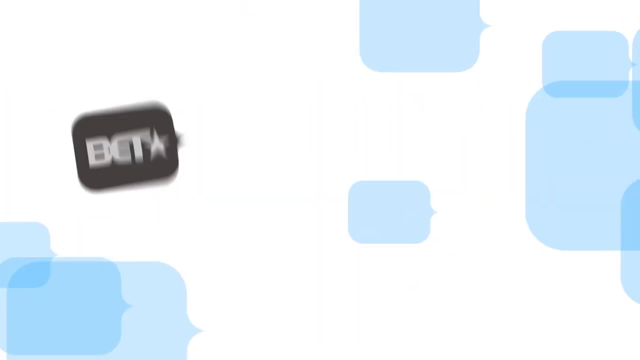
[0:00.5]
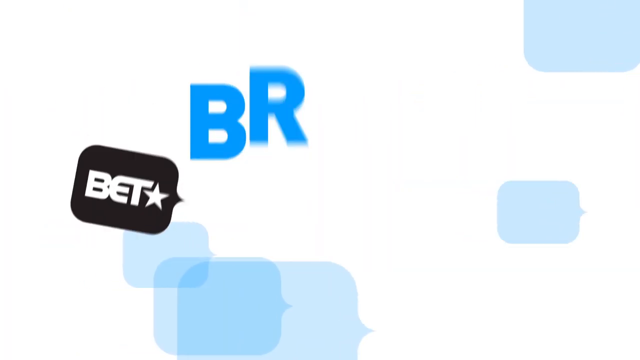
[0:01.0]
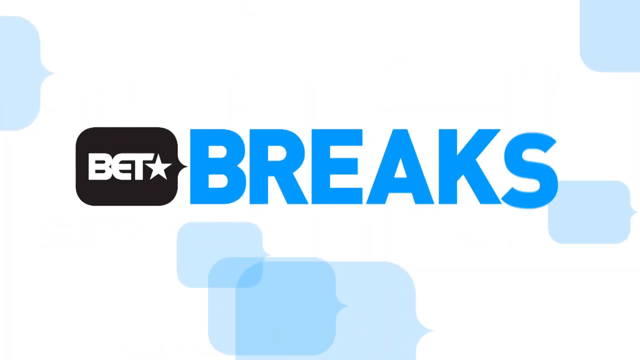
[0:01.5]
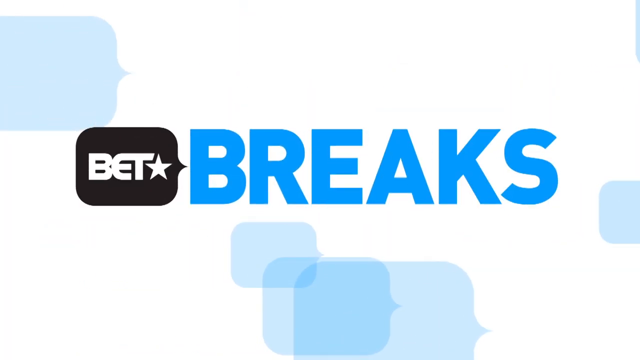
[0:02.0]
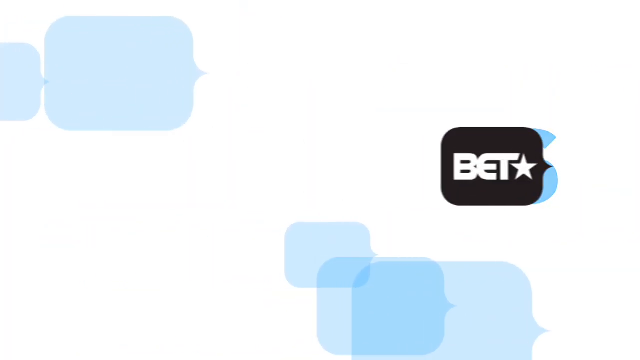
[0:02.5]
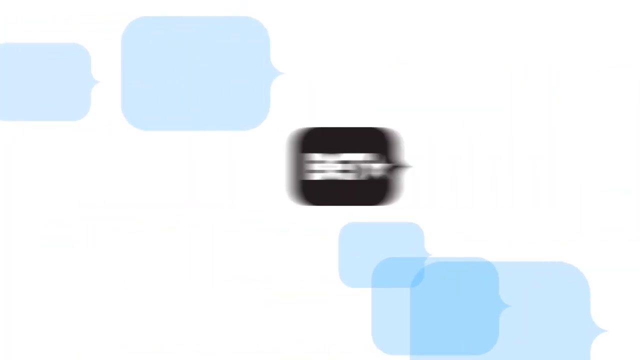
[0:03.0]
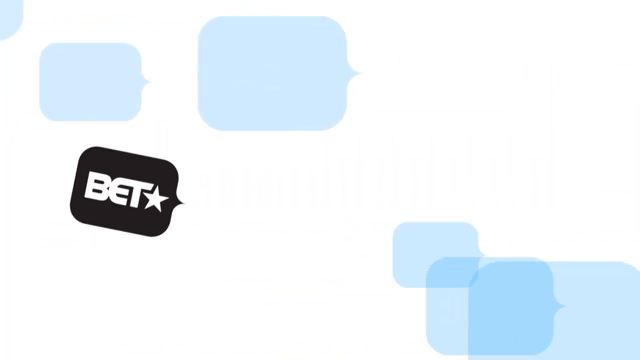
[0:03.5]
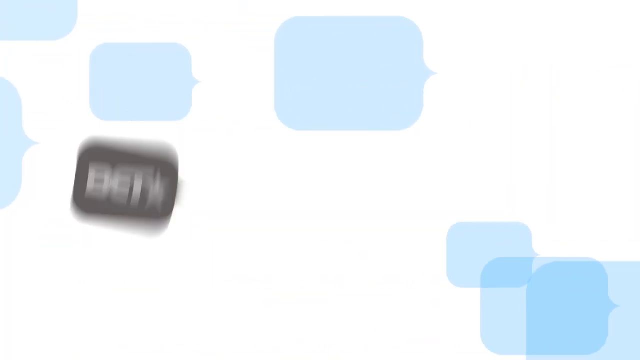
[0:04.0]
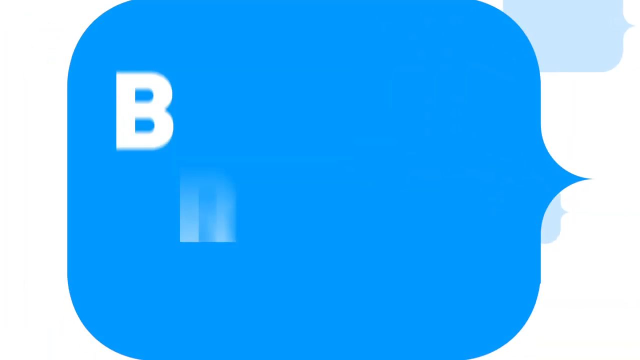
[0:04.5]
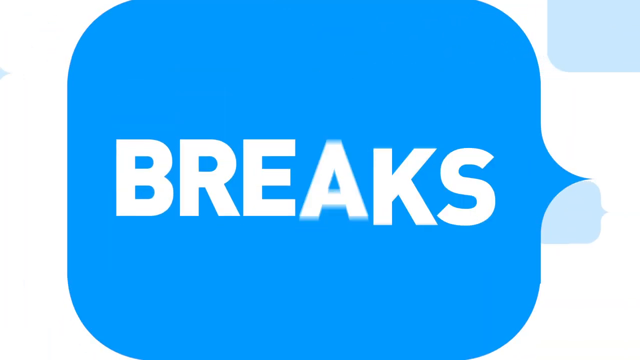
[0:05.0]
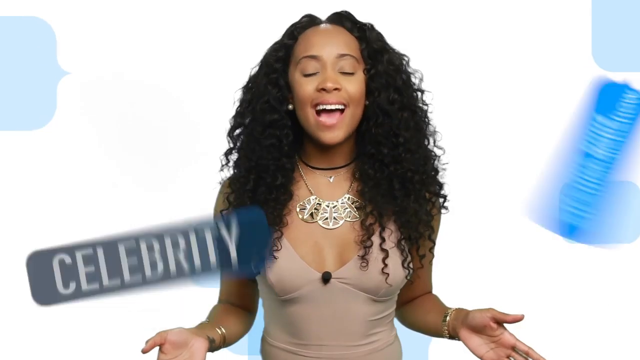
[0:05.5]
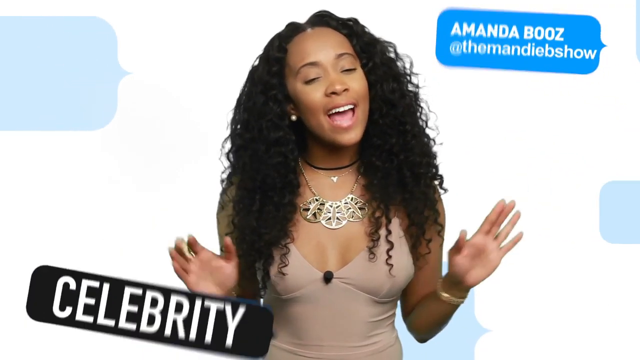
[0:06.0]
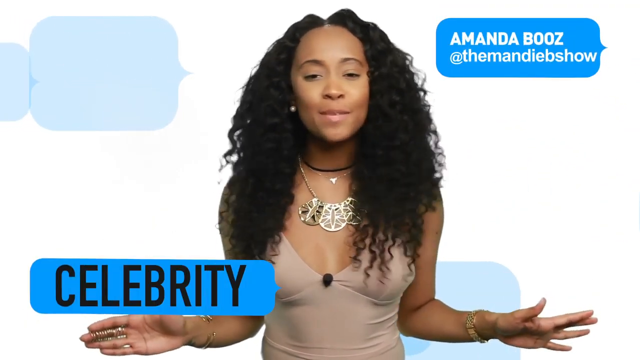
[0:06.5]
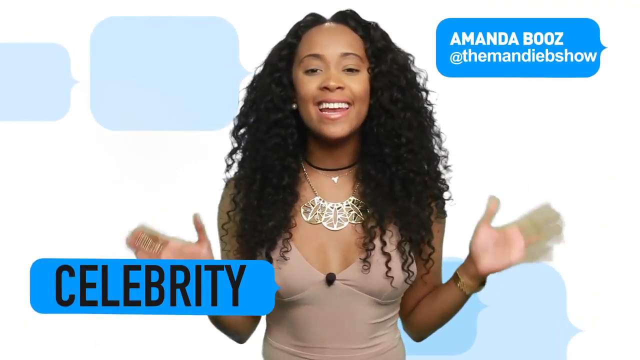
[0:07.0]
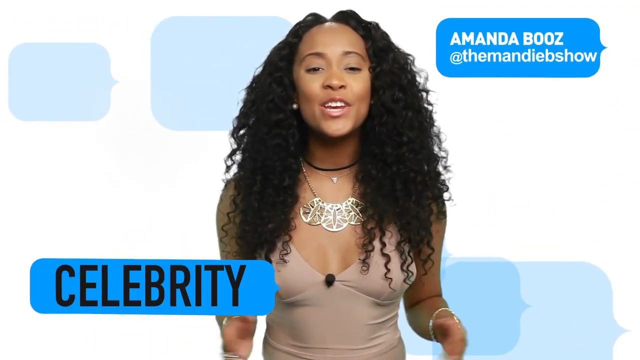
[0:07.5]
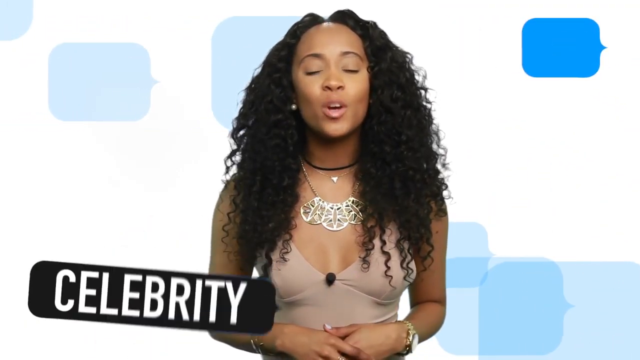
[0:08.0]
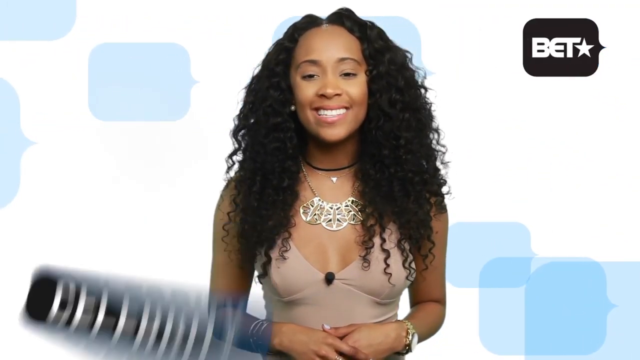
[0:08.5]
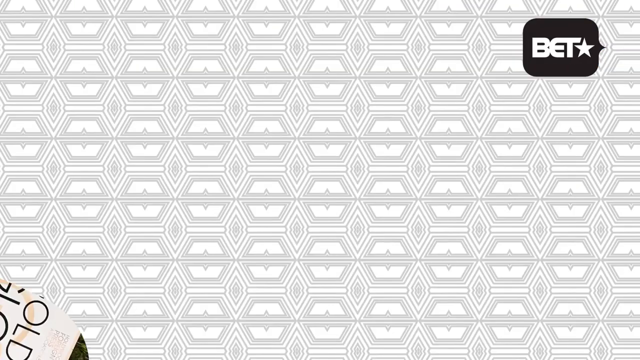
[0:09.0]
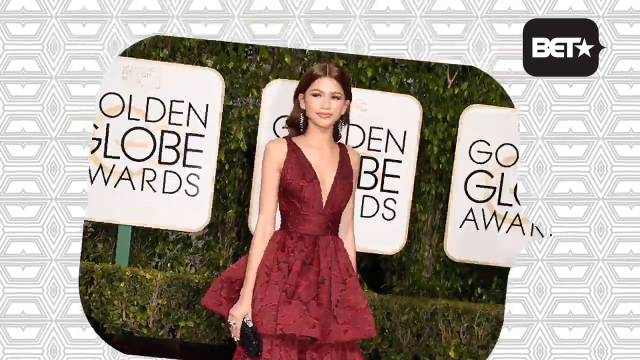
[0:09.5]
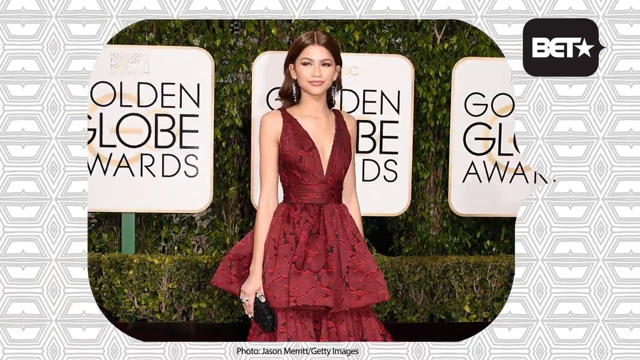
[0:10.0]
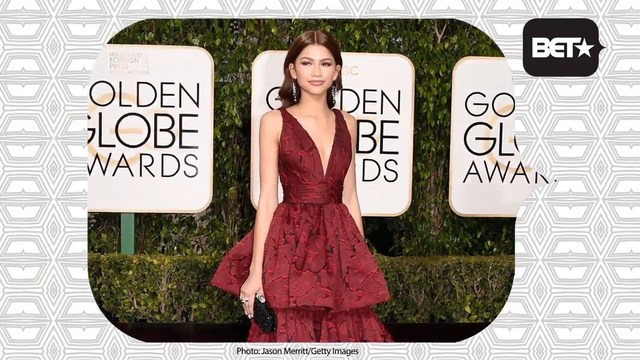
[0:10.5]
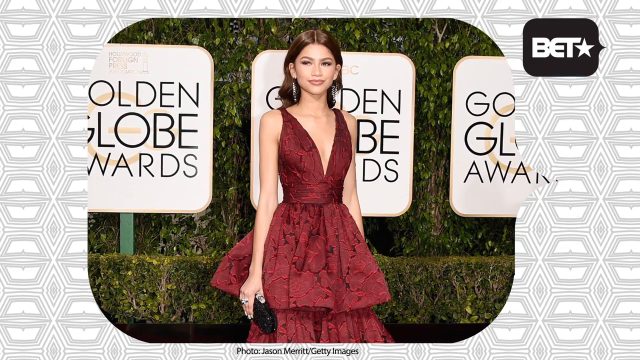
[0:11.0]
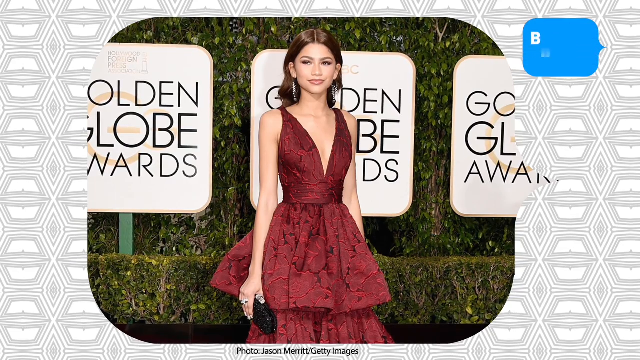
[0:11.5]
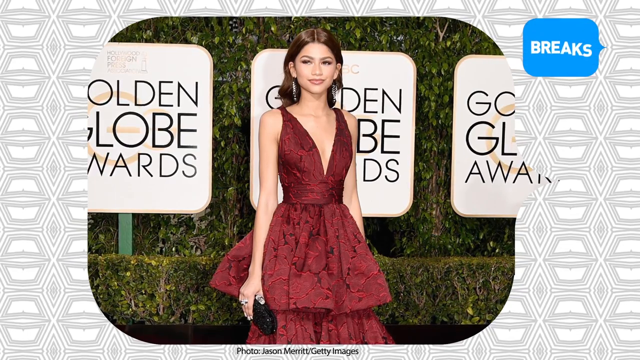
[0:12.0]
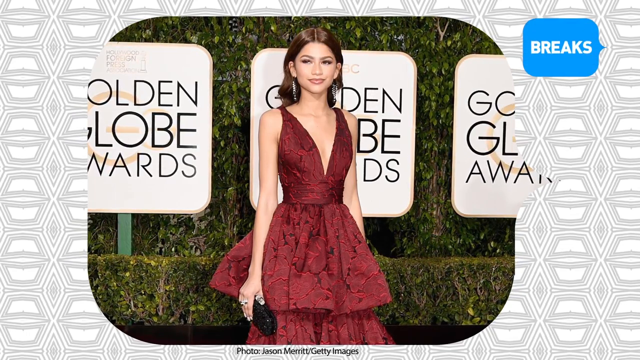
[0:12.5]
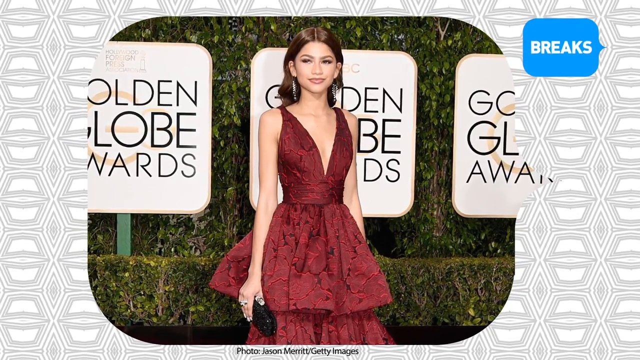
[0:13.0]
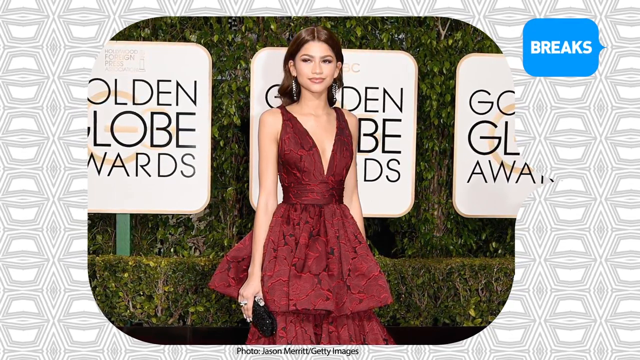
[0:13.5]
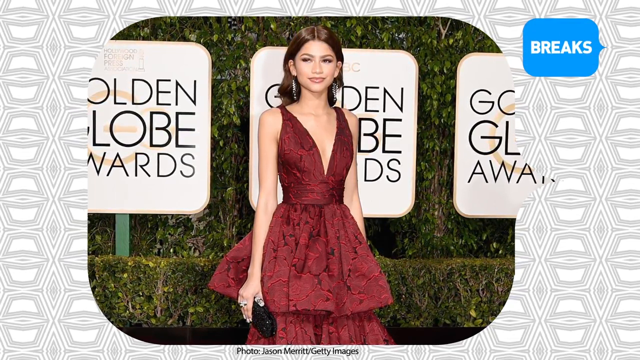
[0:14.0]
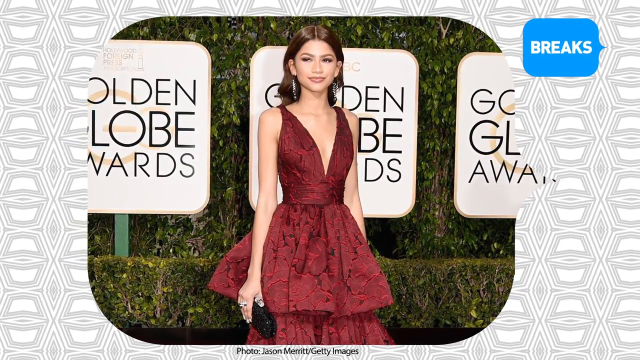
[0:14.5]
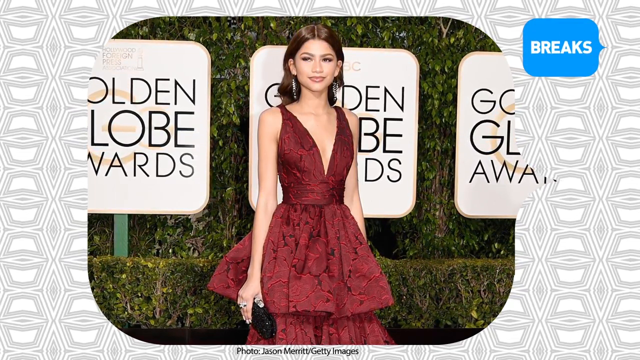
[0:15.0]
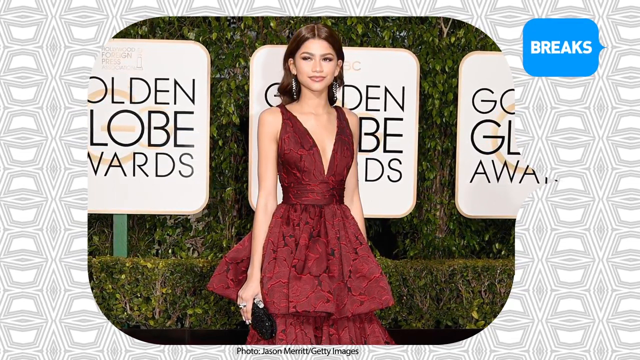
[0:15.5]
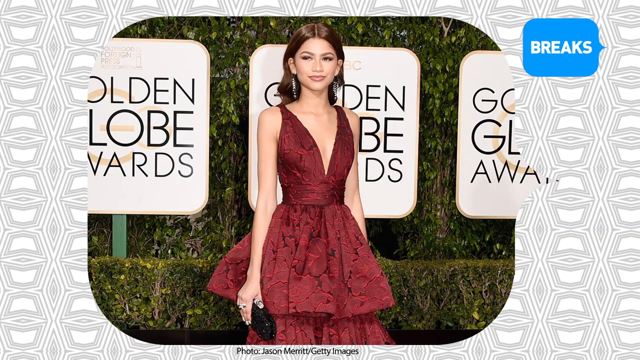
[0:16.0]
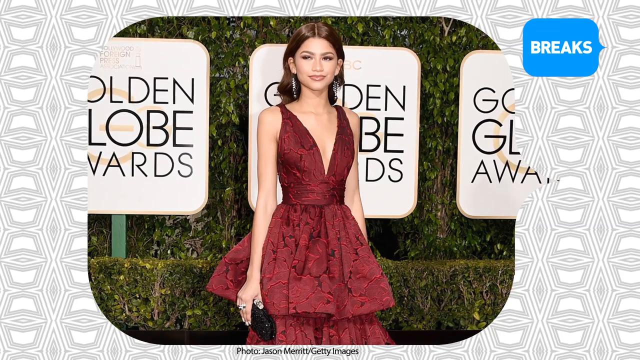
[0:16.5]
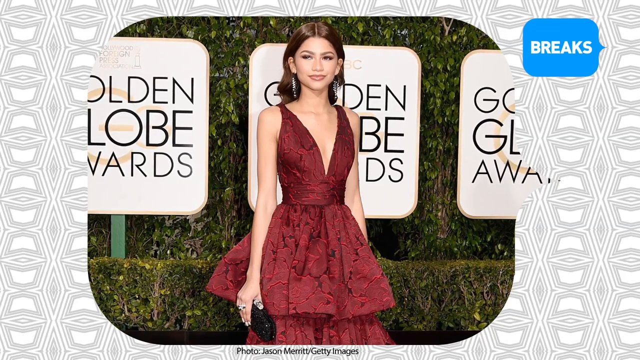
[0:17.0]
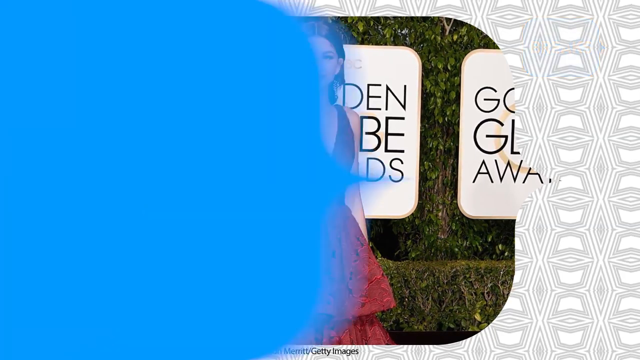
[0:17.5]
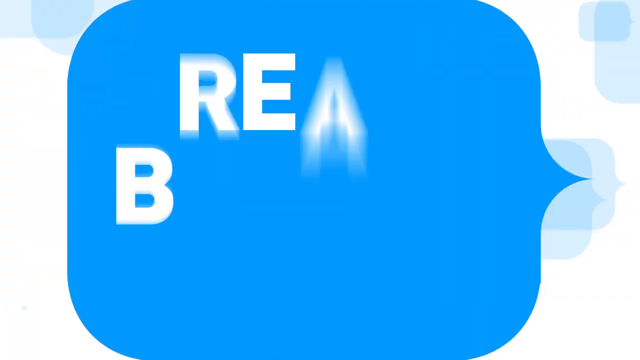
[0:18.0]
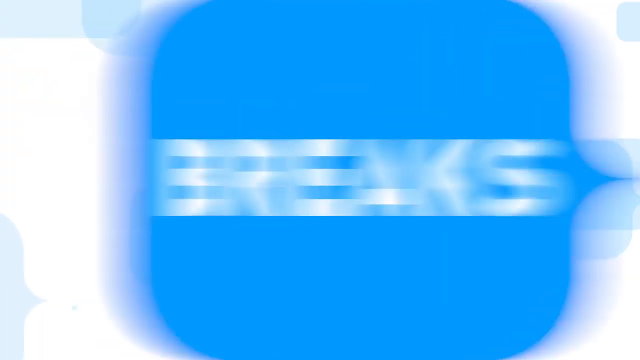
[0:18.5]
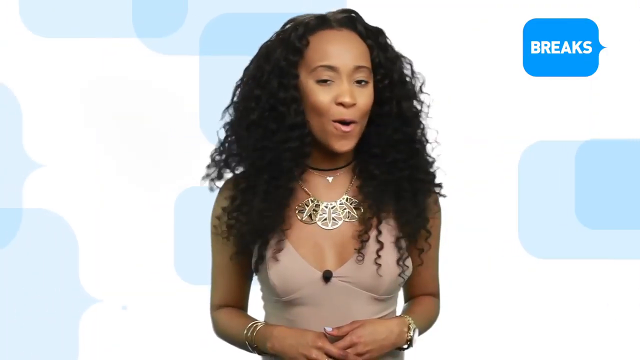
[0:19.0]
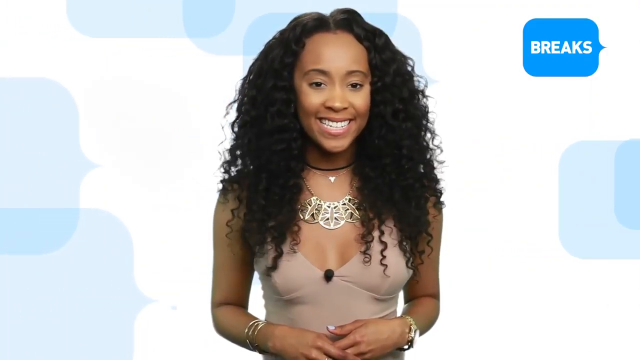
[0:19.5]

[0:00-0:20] The video opens on a white screen, and blue thought bubbles appear from the left and move to the right. A black thought bubble with white writing that says "BET", with a white star next to it, appears at the left and settles in the middle of the screen. To its right, the word "breaks" appears in blue capital letters in the middle of the screen while the blue thought bubbles keep moving from left to right in the background. "Breaks" then disappears in the middle of it, and that disappears too, leaving the white background with blue speech bubbles moving across. A woman appears in the middle of the screen. She is black and has long curly hair. She wears a silver necklace with what appears to be leaves on it, a black choker, a white earring and a strappy pink top, and she talks to the camera. In the top right of the screen a blue speech bubble appears with "Amanda Booz" and, underneath, her twitter handle, "@themandiebshow". In the bottom left corner a black speech bubble with white writing says "celebrity"; it then turns into a blue speech bubble and "celebrity" disappears. In the top right corner the speech bubble turns into a black speech bubble with white words that say "bet" with a star at the end. A photograph then appears in the middle of the screen of a woman standing in front of three Golden Globe Awards posters, with a green bush behind them. She wears a strappy red dress that is very low cut, the cut finishing at her navel. A blue speech bubble with the word "breaks" in it appears in the middle of the screen from the right, then disappears, and the video cuts back to the woman talking to the camera. She is smiling.